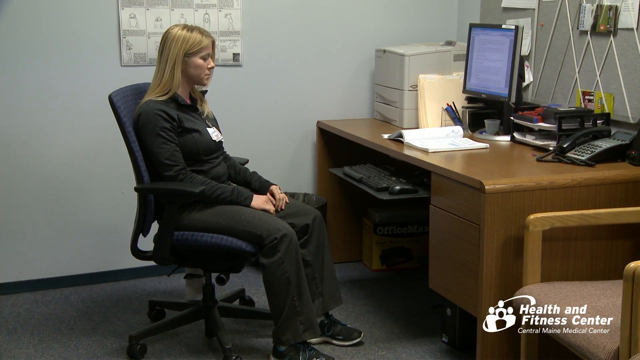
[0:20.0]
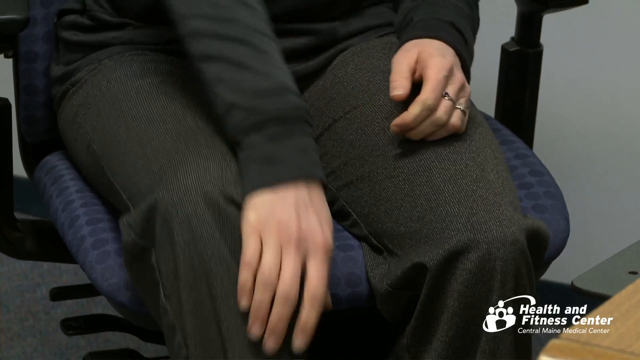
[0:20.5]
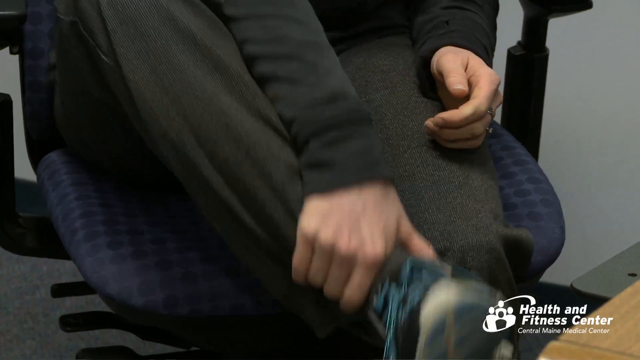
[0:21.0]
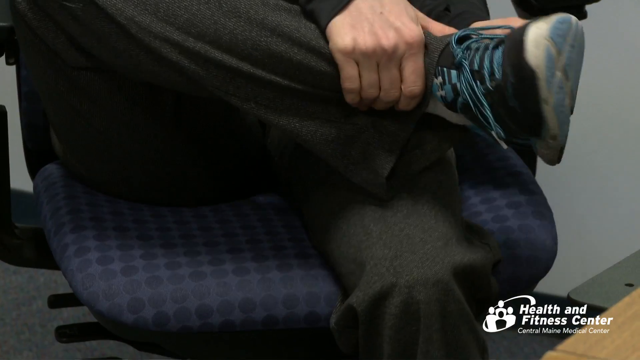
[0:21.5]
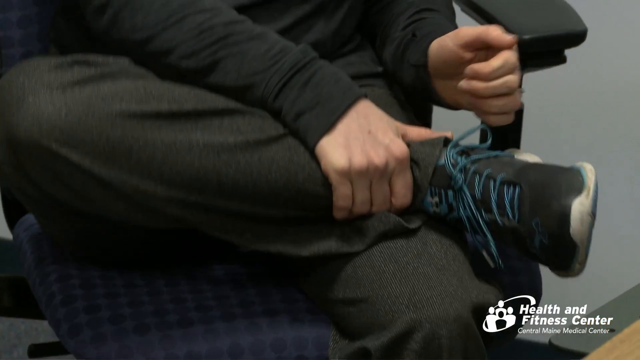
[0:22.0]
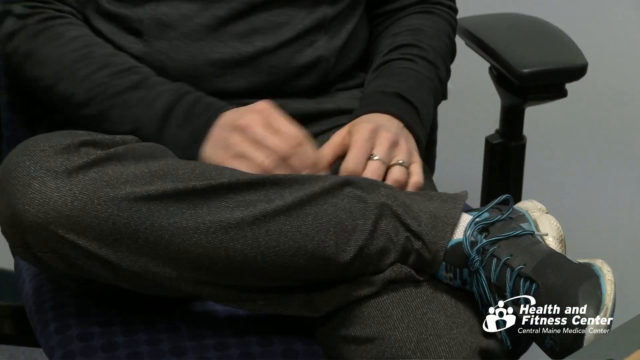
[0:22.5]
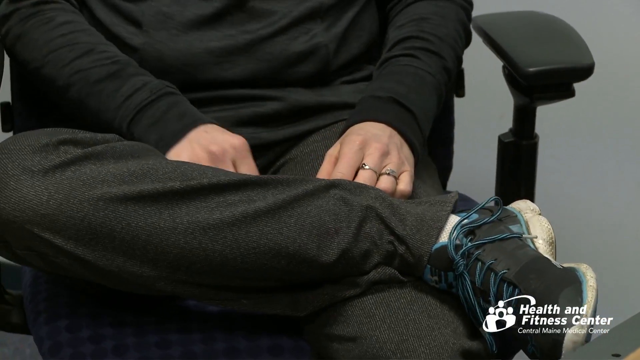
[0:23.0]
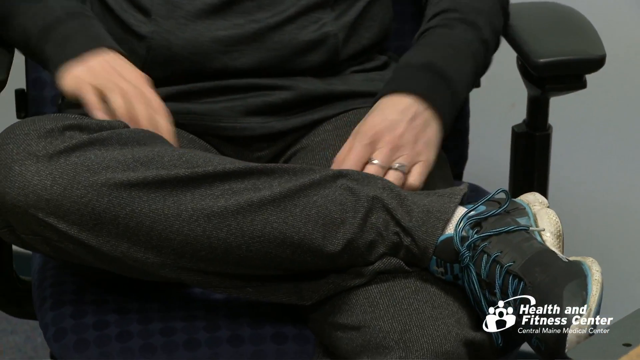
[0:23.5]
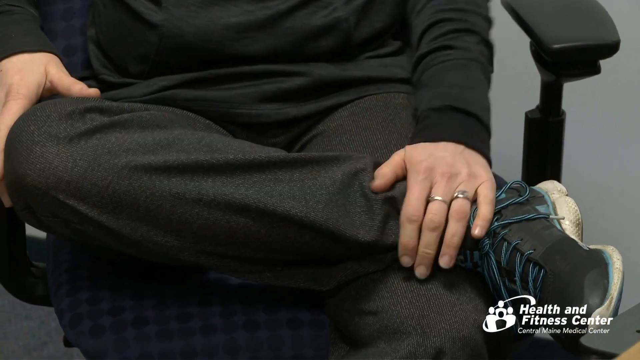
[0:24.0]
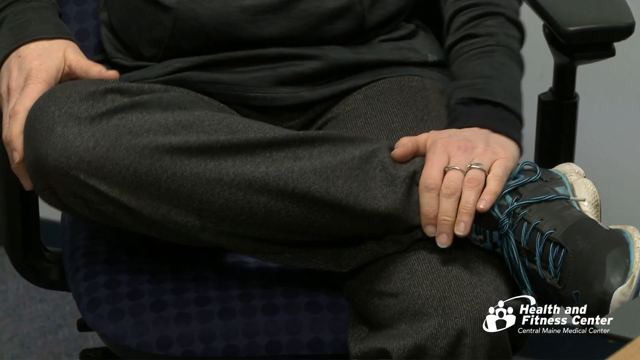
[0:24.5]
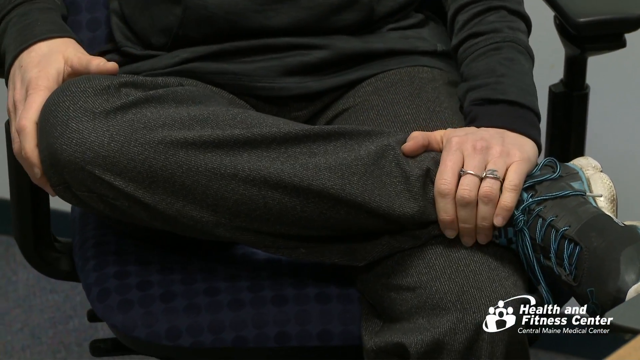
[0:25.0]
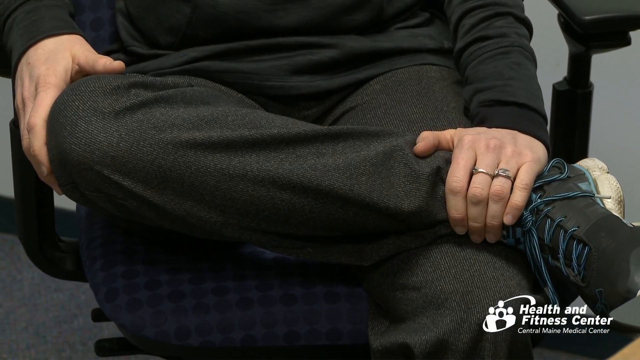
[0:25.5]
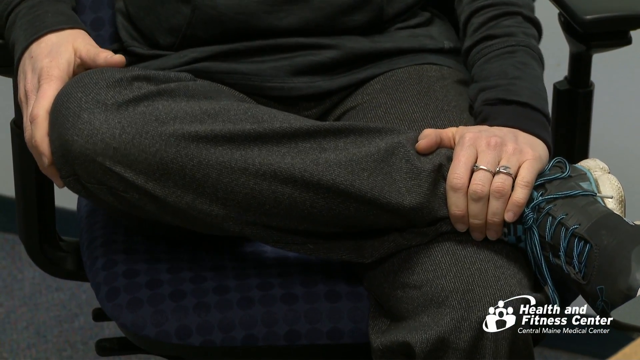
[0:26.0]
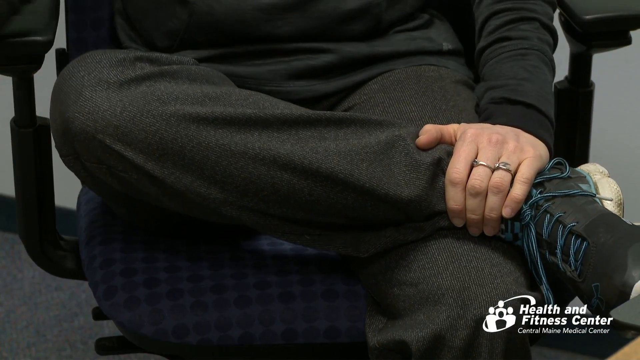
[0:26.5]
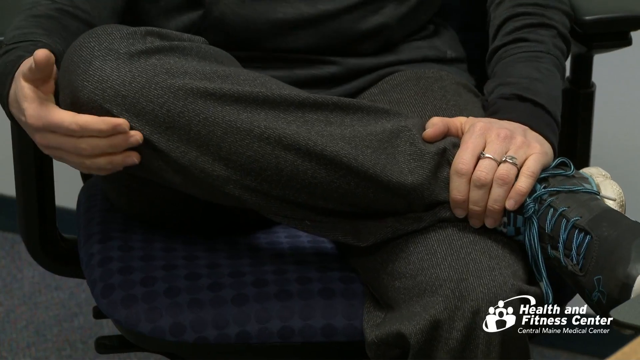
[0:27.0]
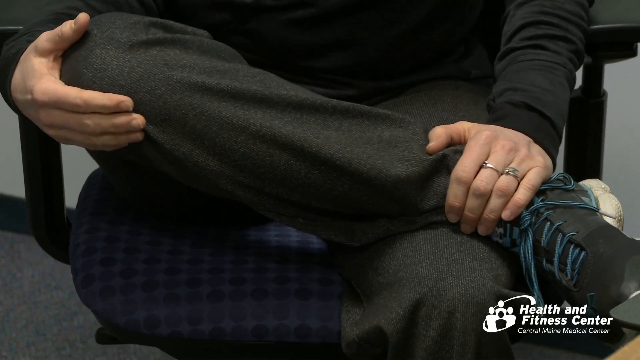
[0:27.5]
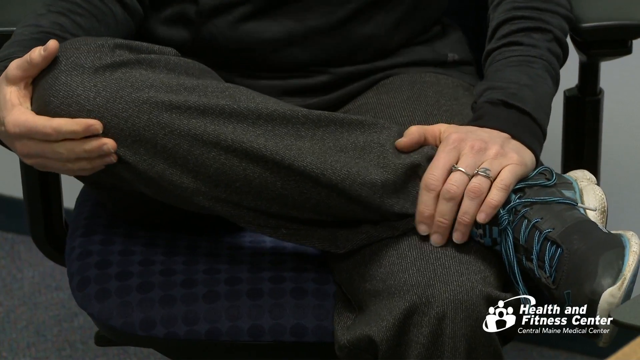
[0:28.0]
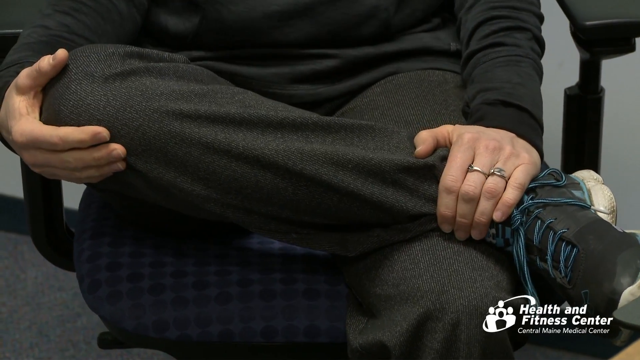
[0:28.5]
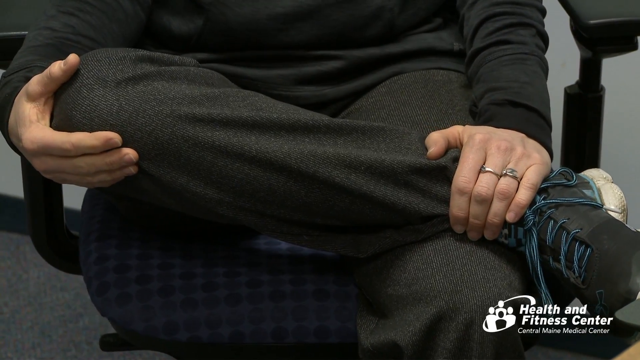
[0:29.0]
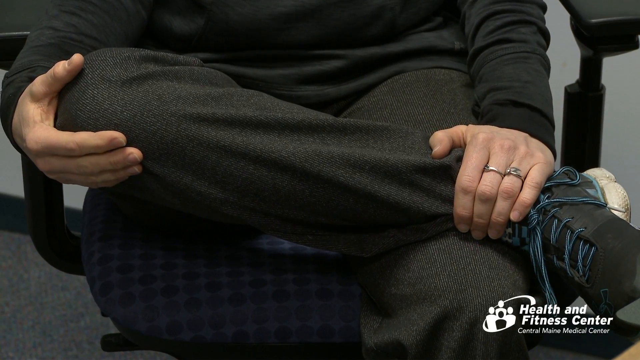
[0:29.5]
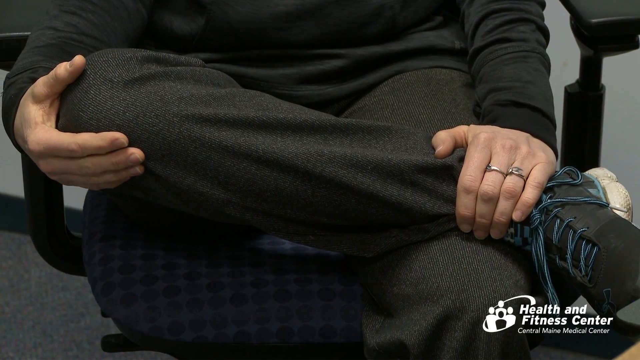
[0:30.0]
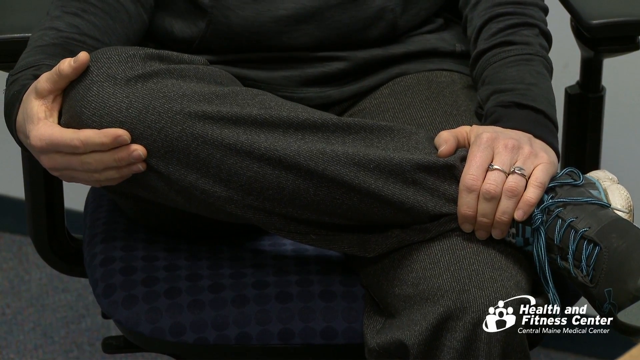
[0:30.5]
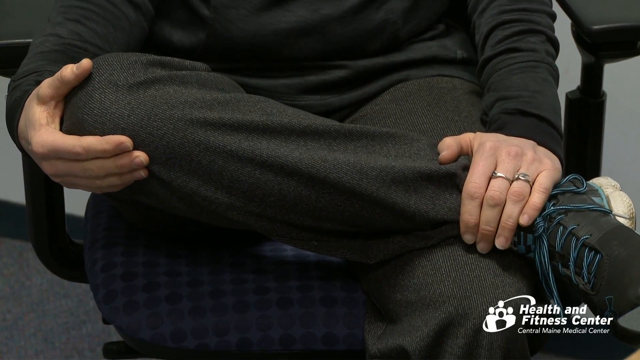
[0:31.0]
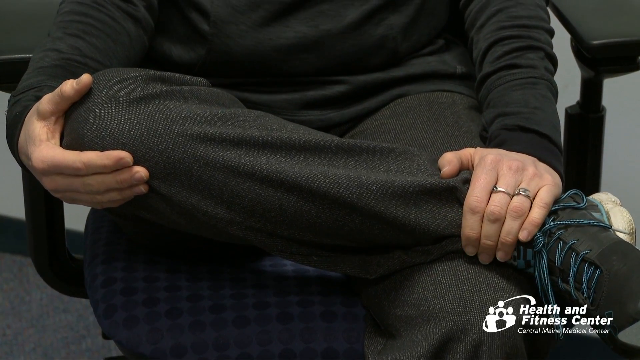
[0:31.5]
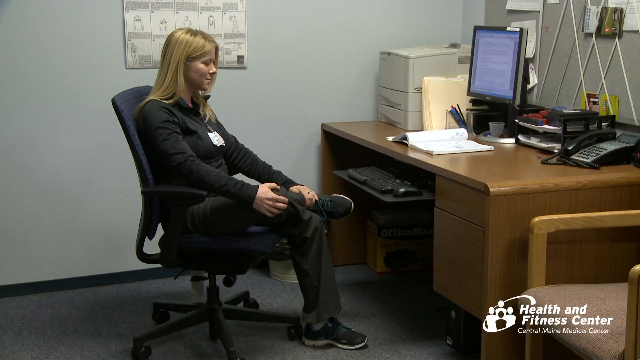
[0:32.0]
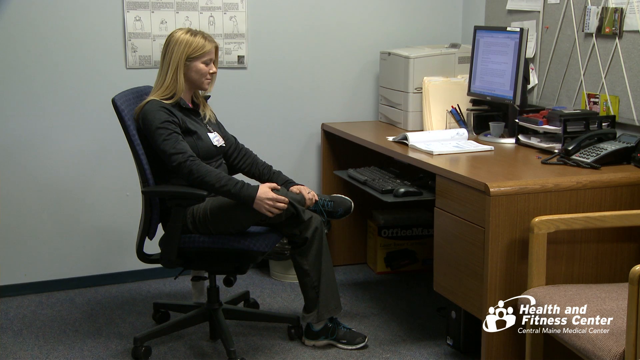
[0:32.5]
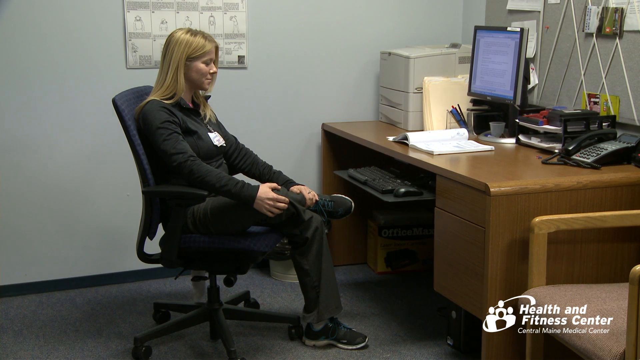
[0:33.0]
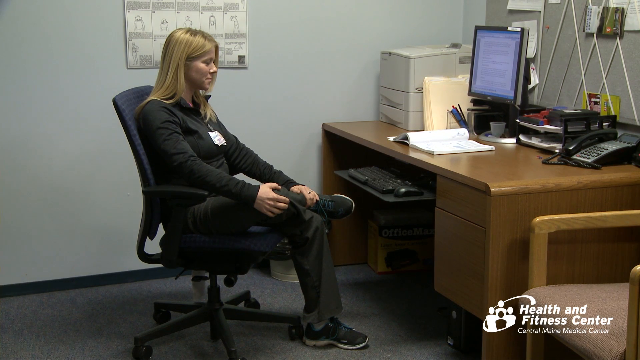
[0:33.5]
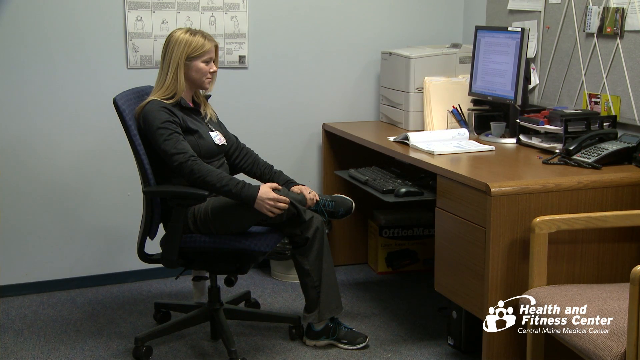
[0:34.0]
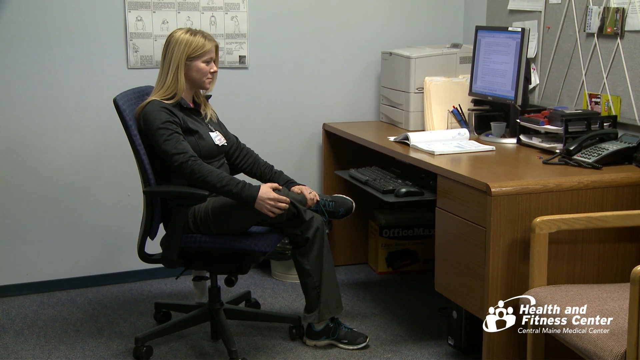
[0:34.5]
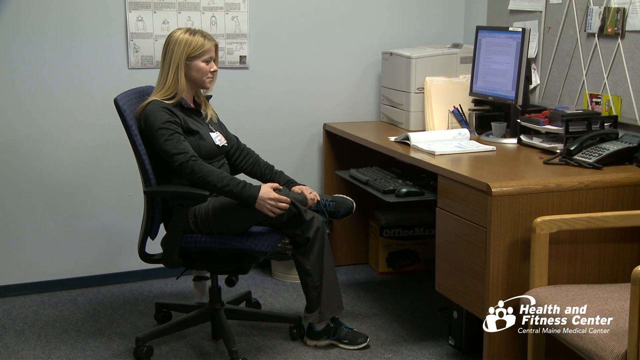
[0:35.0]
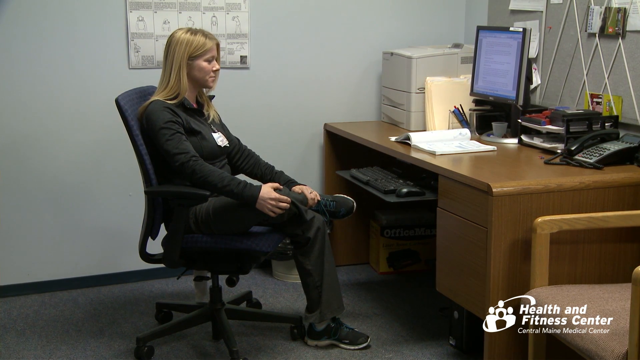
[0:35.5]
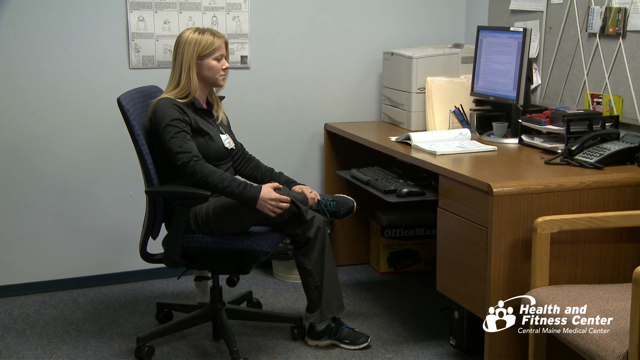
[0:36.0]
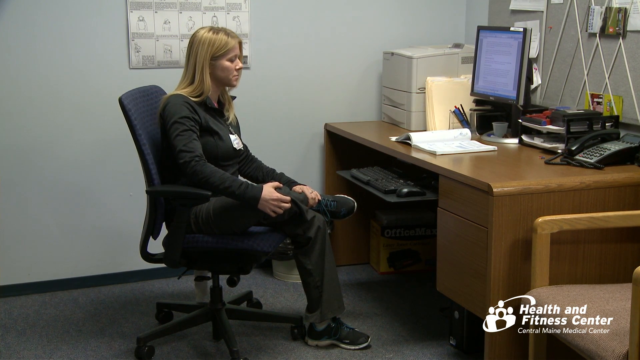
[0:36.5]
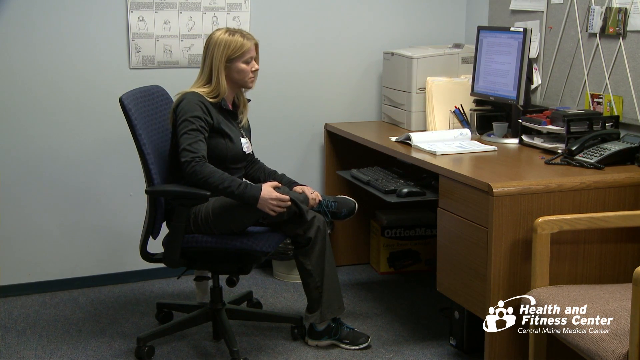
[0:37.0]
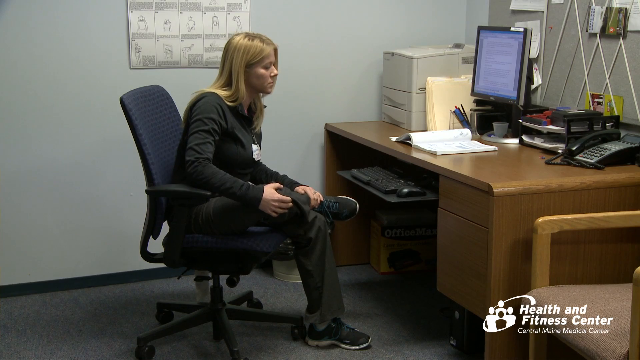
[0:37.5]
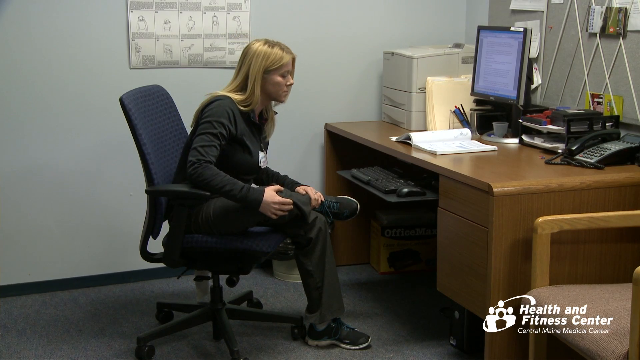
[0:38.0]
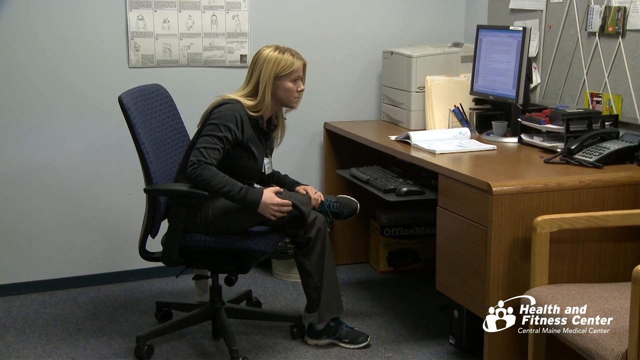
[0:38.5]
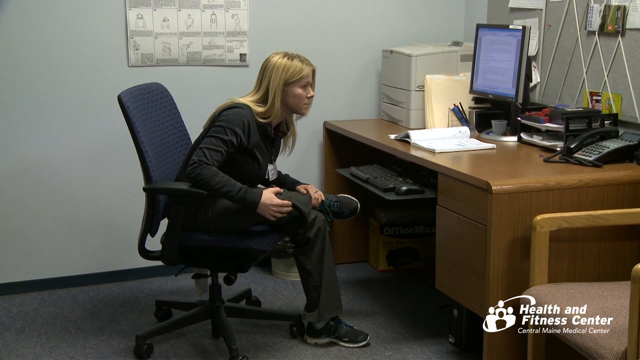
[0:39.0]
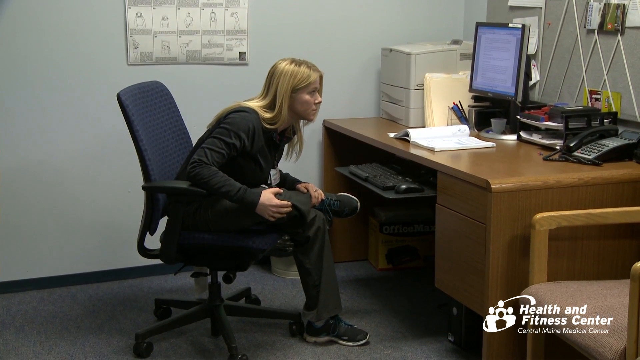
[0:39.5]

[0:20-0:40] The young woman is briefly seen from the side before the view rapidly changes to a close-up of her waist and legs. She lifts her right leg and crosses it over her left, so that her right ankle is on her left thigh. She wears dark grey trousers and grey trainers with blue laces. She moves her right arm so that her right hand holds her right knee, and places her left hand on her ankle. The camera zooms out to show her from the side again. She bends her head and chest forwards, almost placing her head on her knee. She wears an ID badge on her left lapel and two rings on her left hand: a gold ring on her index finger and what looks like a silver ring on her ring finger.